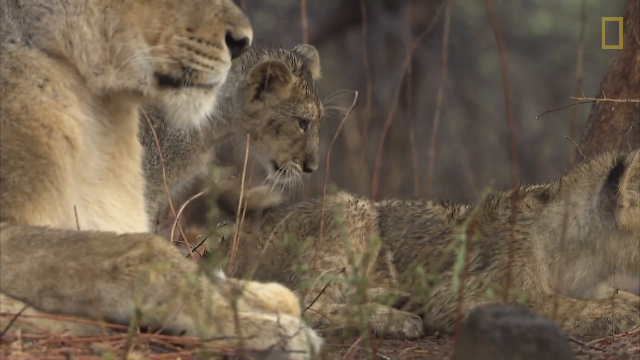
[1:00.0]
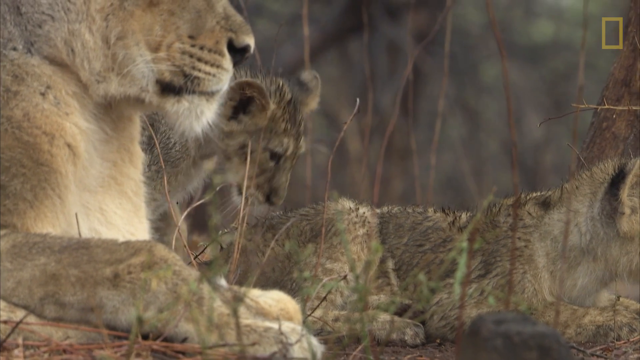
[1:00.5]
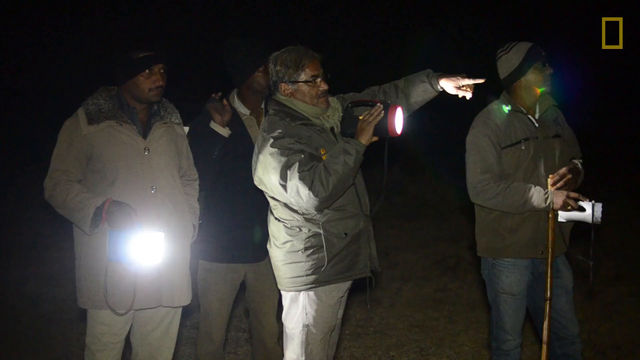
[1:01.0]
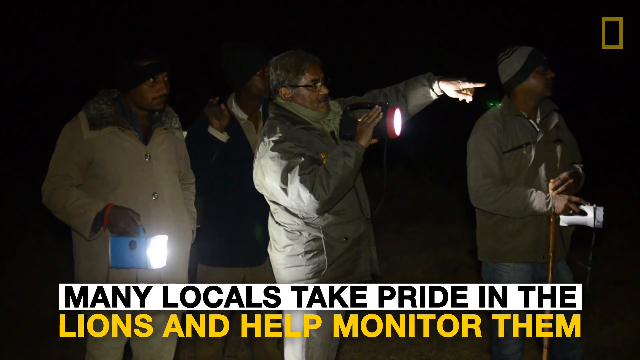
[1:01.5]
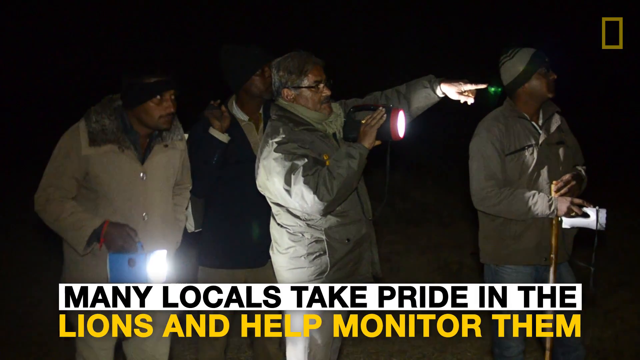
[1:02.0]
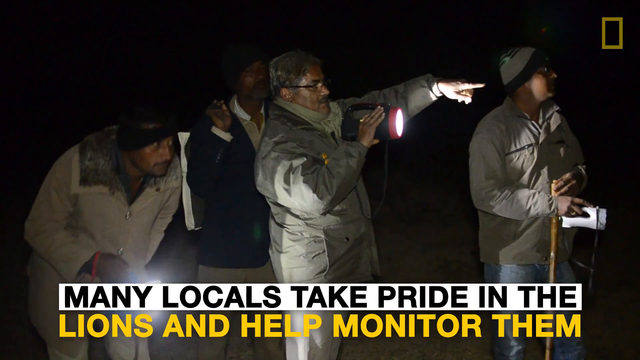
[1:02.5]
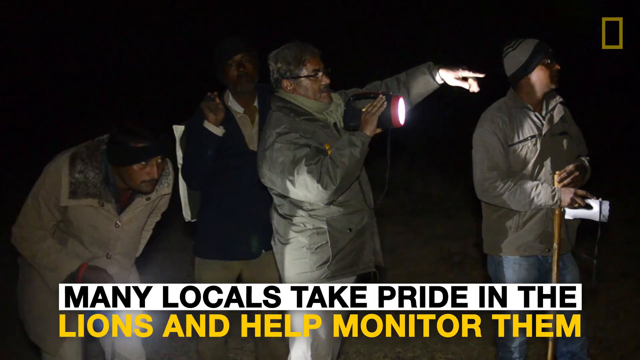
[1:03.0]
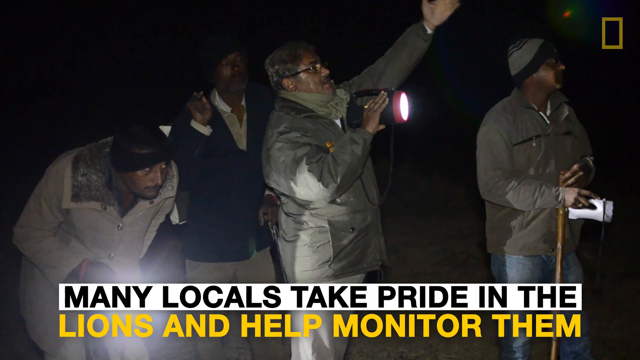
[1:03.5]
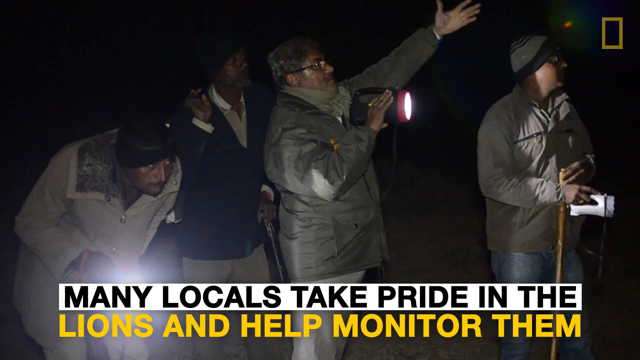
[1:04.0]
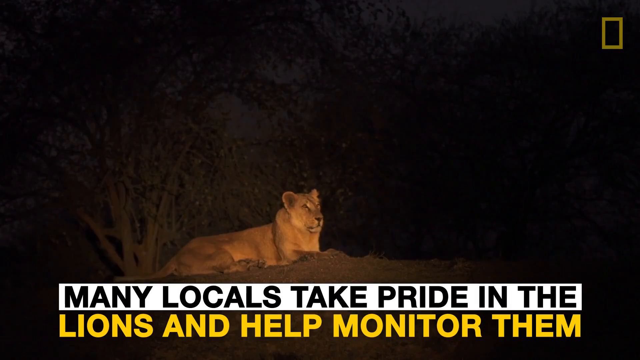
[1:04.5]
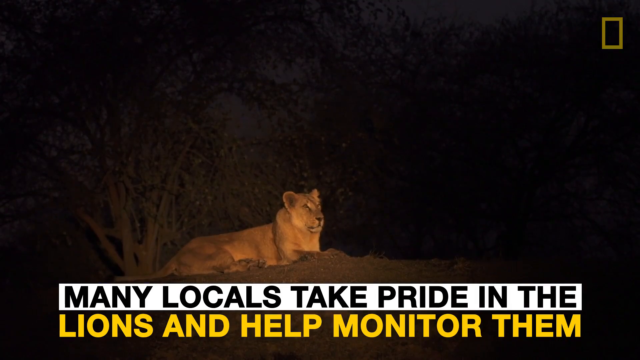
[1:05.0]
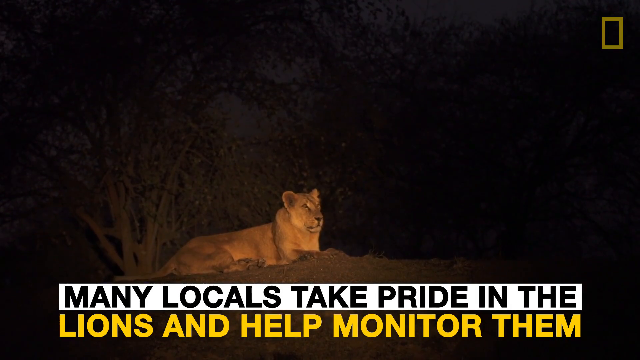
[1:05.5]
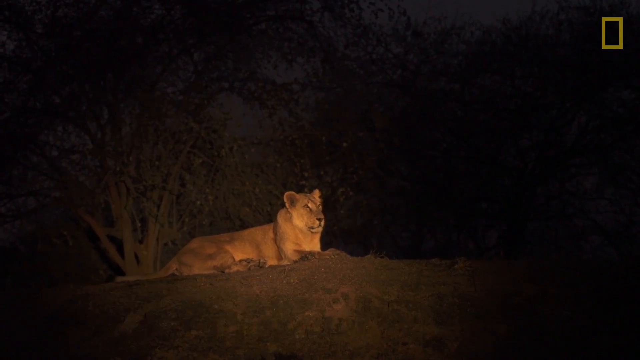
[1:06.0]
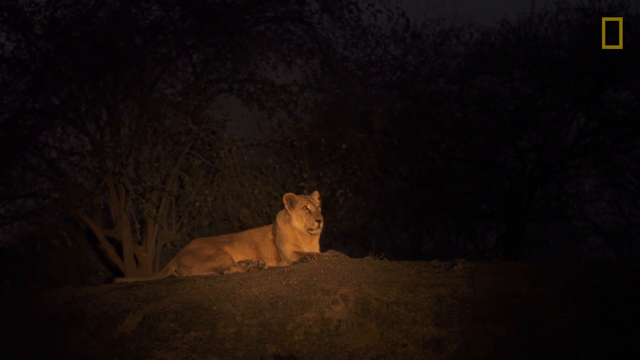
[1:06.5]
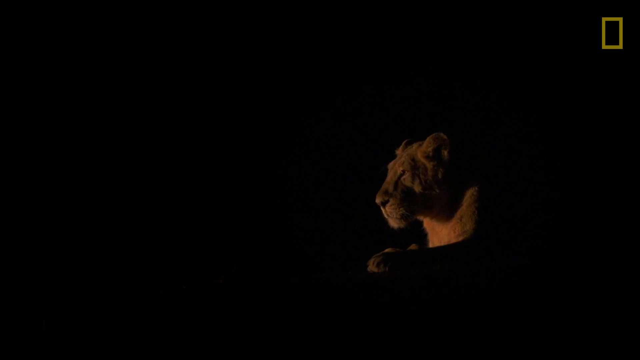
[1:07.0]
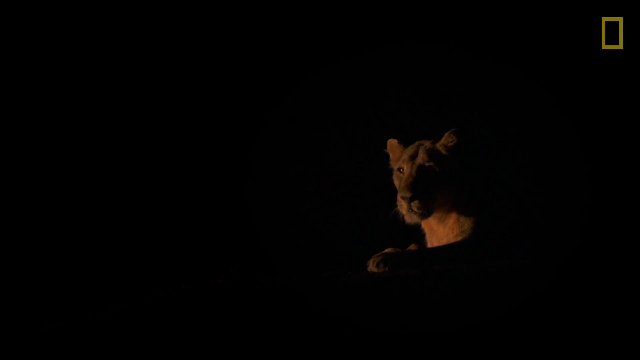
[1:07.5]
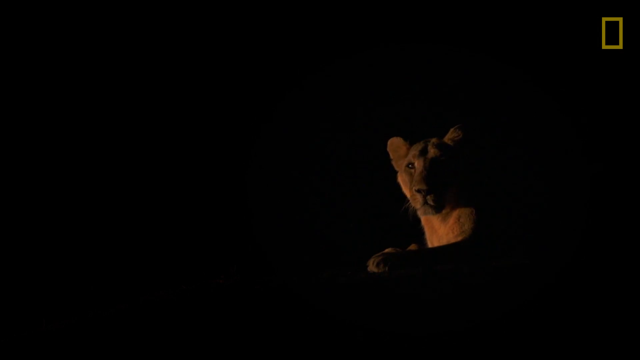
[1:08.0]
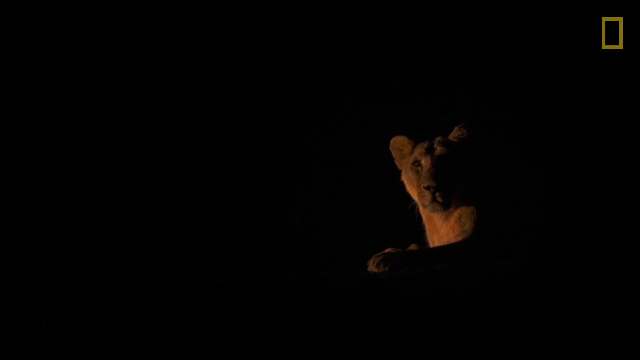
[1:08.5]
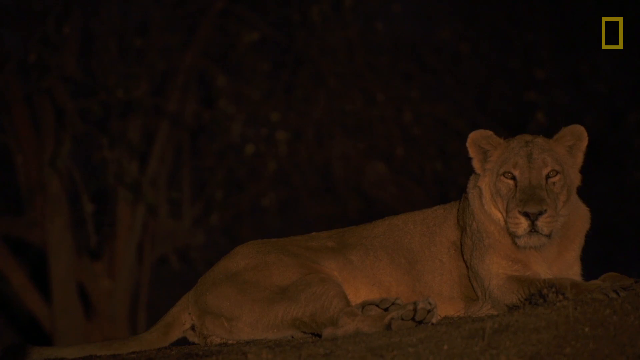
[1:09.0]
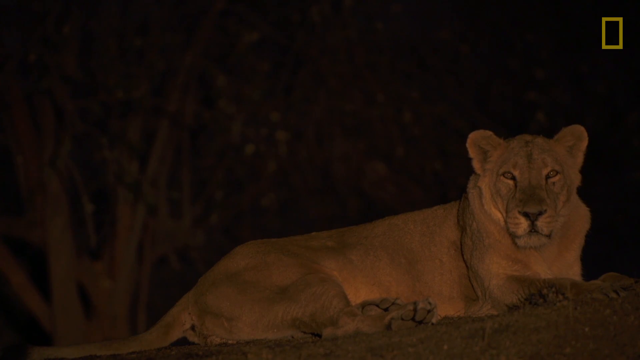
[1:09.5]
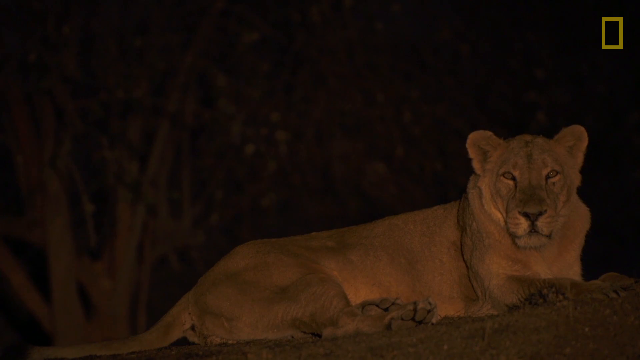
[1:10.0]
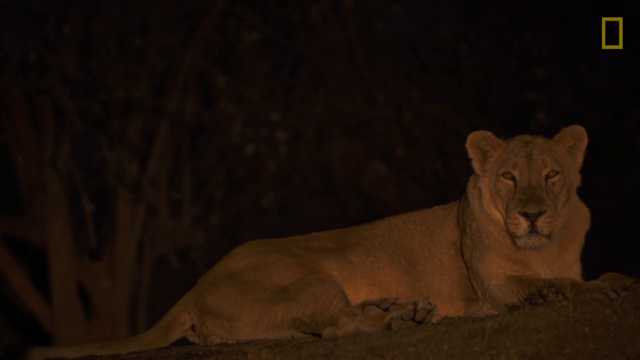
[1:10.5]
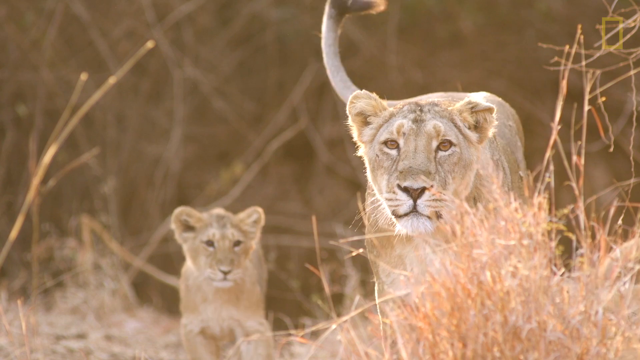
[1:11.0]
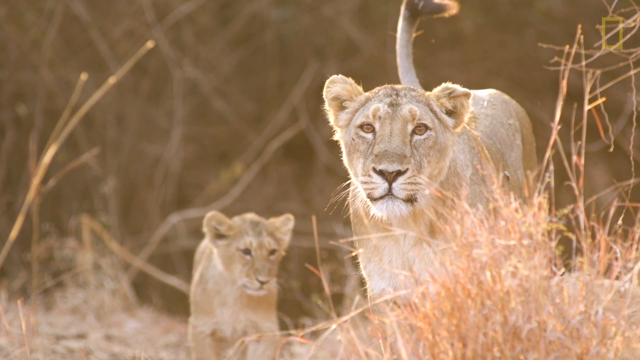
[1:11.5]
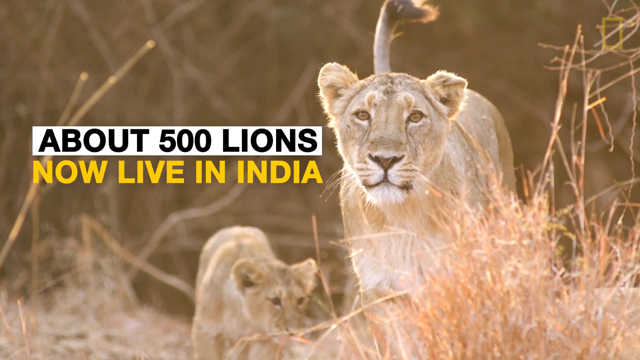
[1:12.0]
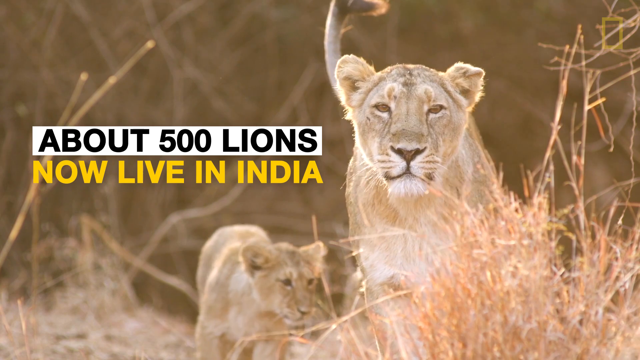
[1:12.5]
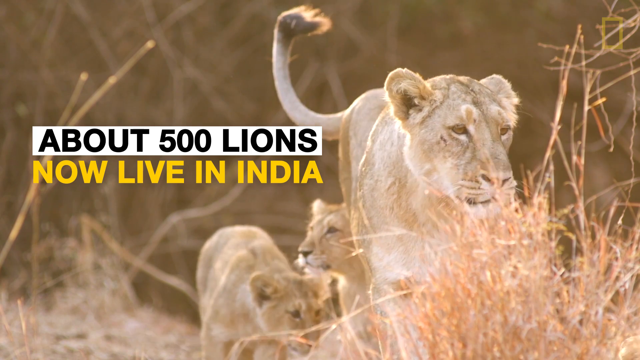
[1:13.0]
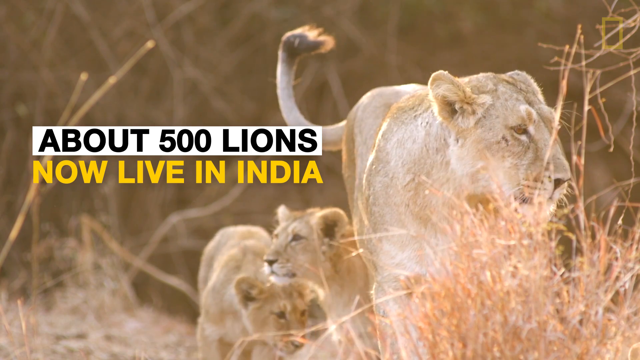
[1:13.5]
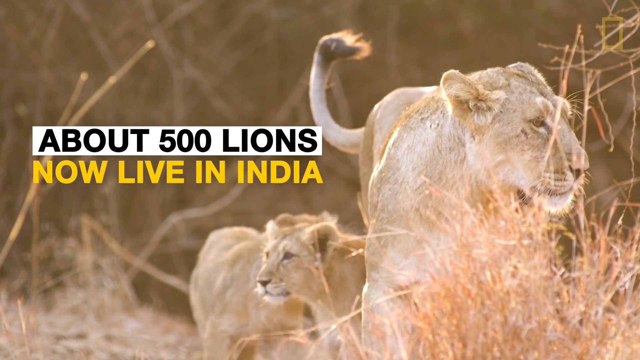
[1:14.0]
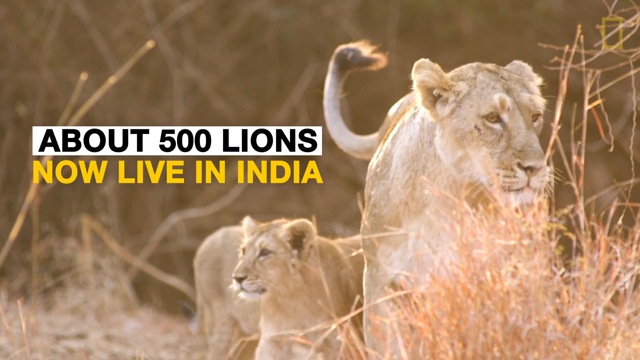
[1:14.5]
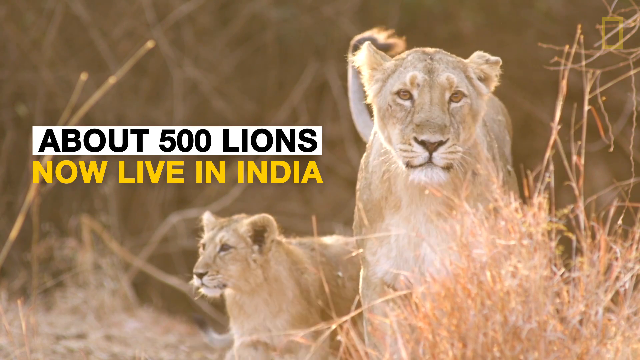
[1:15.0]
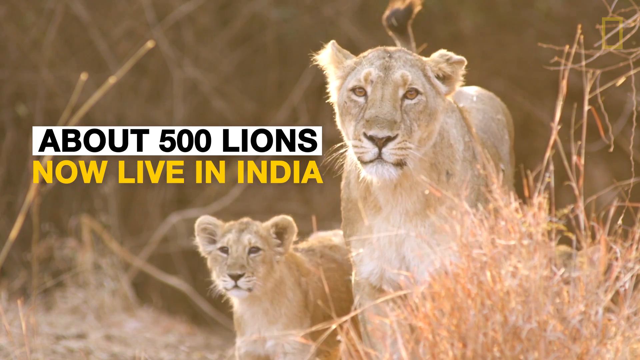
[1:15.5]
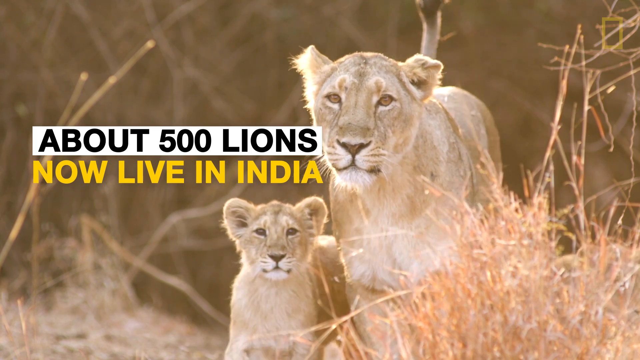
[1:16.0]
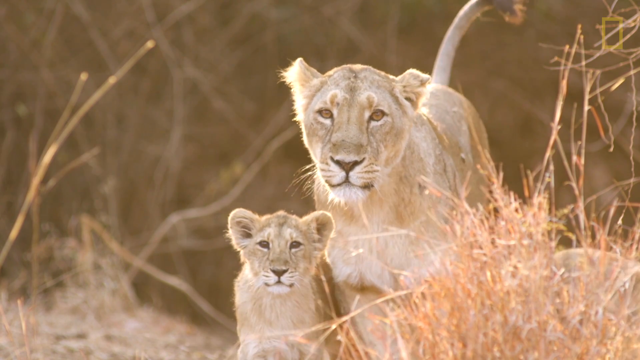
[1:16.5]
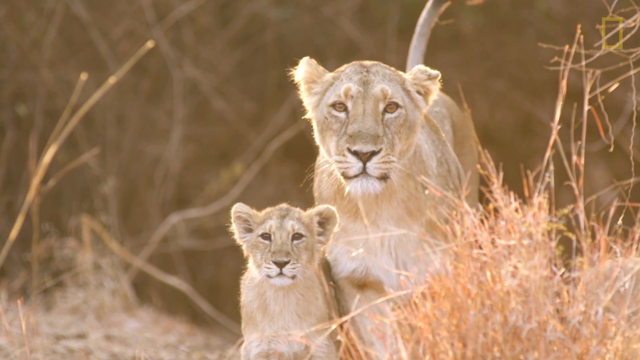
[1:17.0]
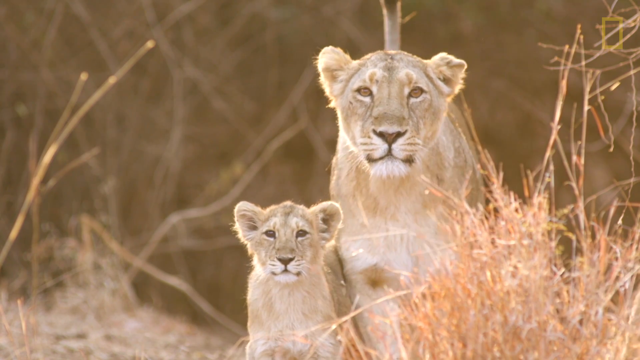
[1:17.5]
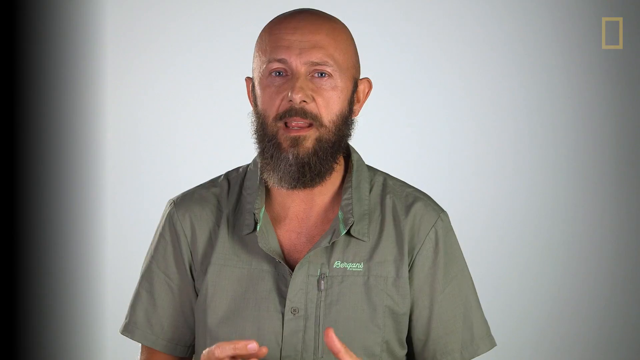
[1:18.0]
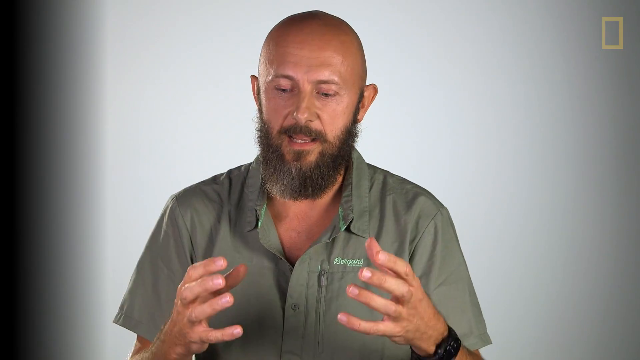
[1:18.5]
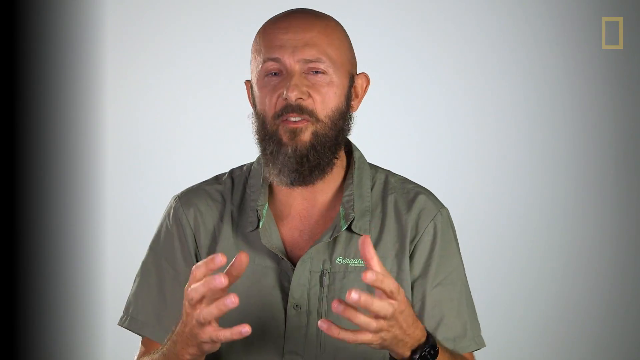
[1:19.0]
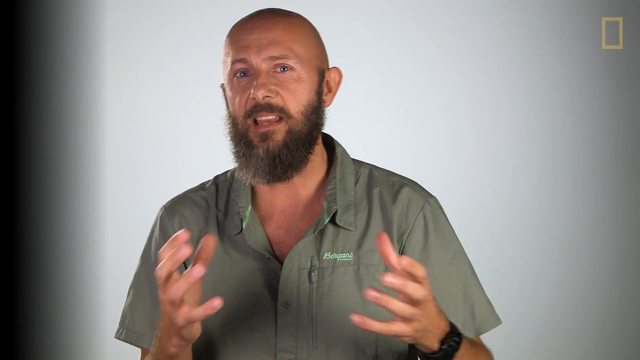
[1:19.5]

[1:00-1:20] It is nighttime, and more lions are shown at night in different shots. On-screen text says "about 500 lions now live in India" and "many locals take pride in the lions and help monitor them." Indian men at night, kind of with microphones, look at the lions and speak about them. At the end, the video cuts back to the conservation photographer.